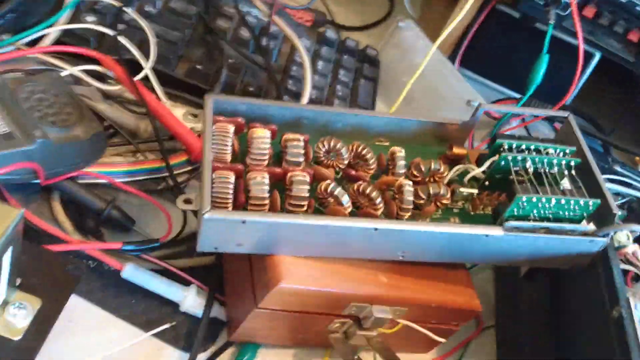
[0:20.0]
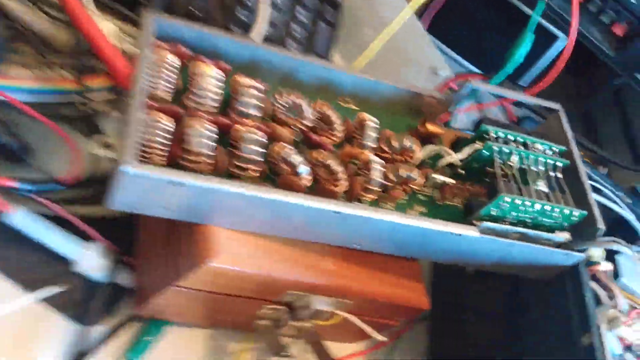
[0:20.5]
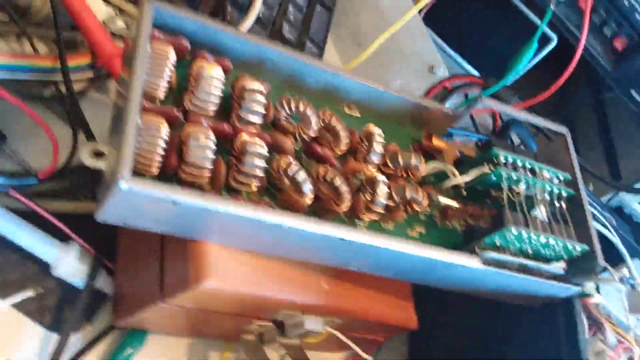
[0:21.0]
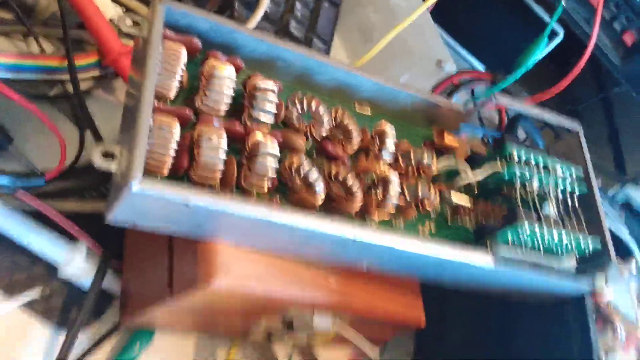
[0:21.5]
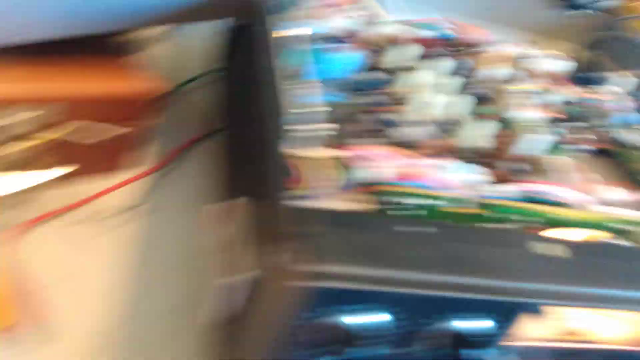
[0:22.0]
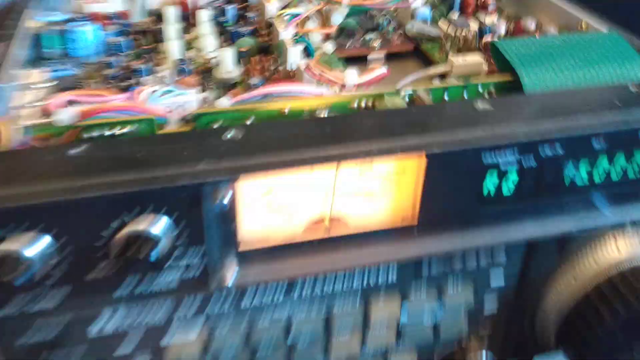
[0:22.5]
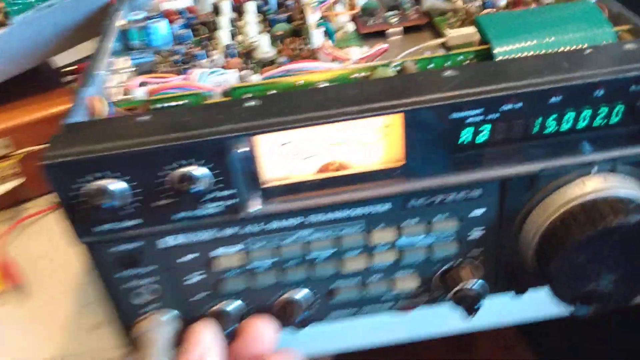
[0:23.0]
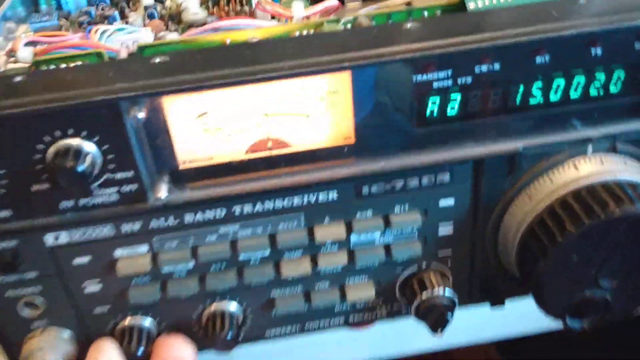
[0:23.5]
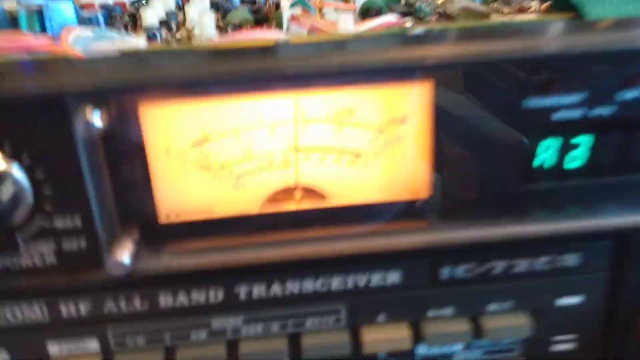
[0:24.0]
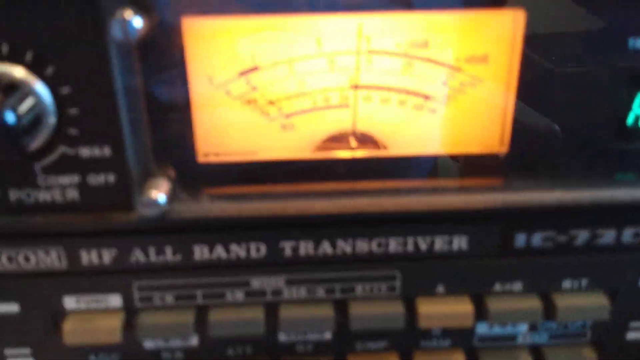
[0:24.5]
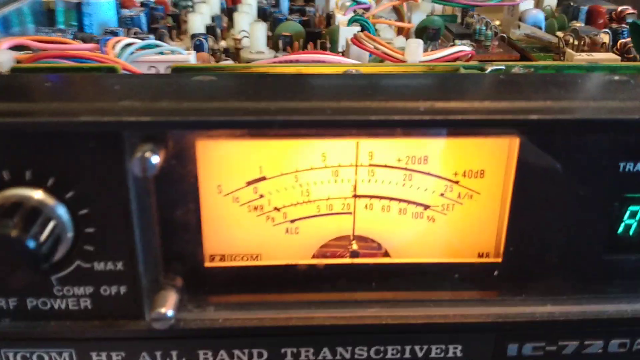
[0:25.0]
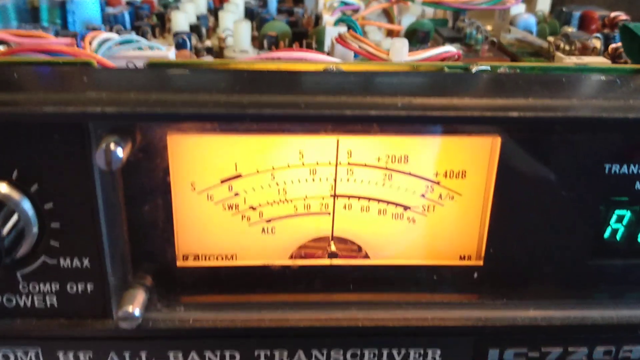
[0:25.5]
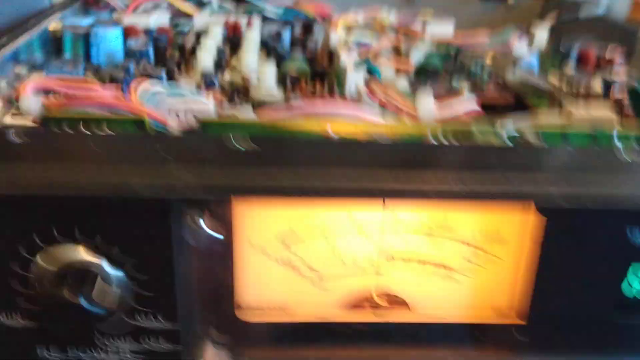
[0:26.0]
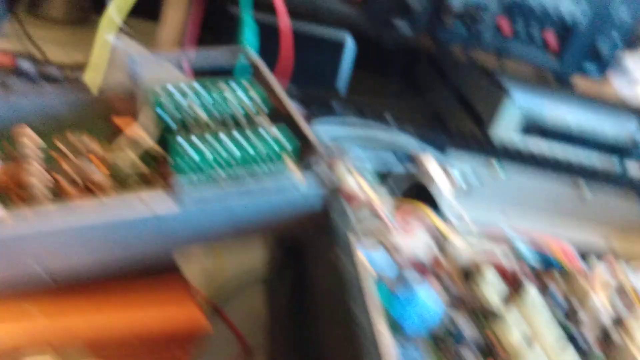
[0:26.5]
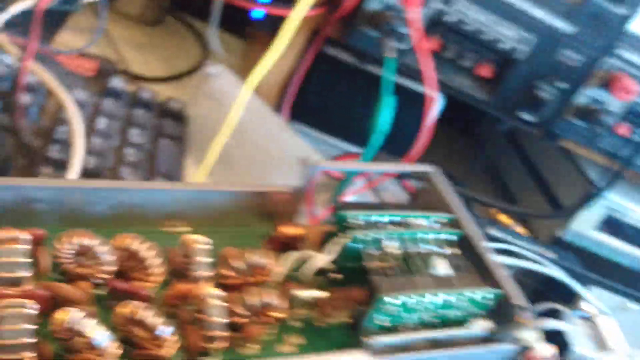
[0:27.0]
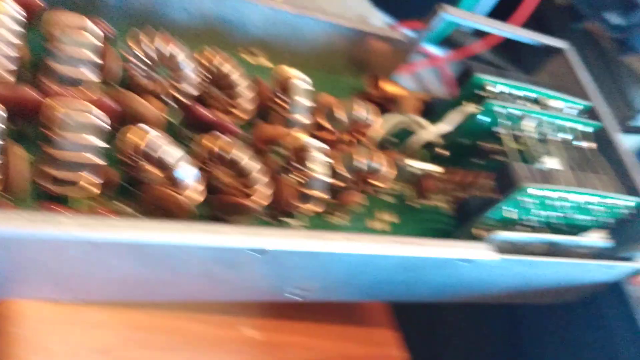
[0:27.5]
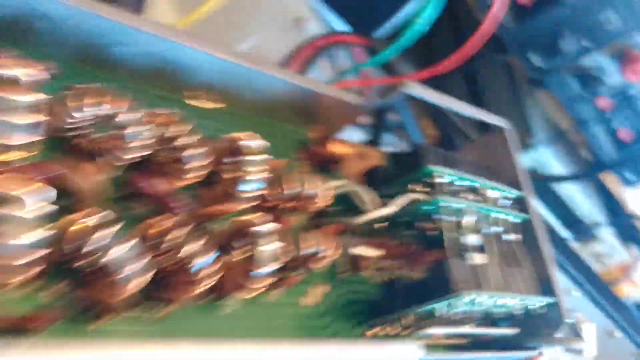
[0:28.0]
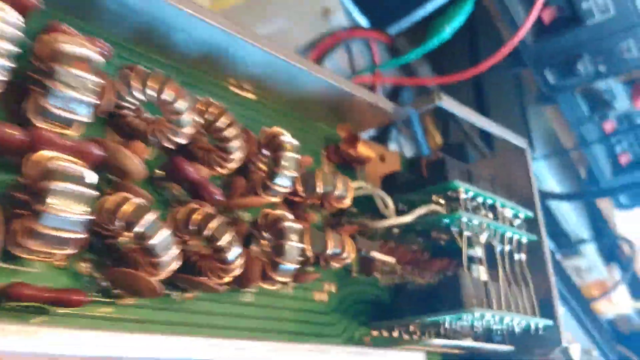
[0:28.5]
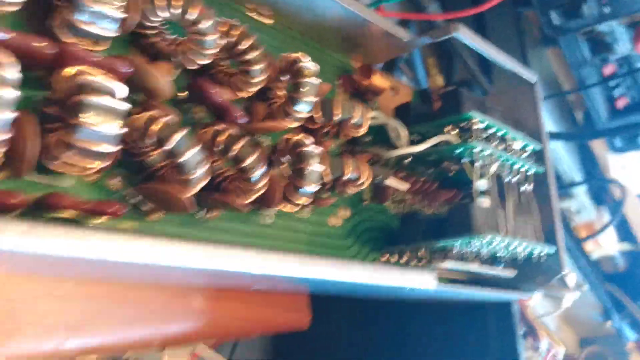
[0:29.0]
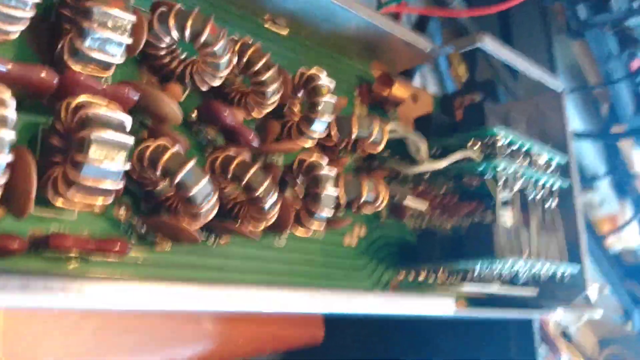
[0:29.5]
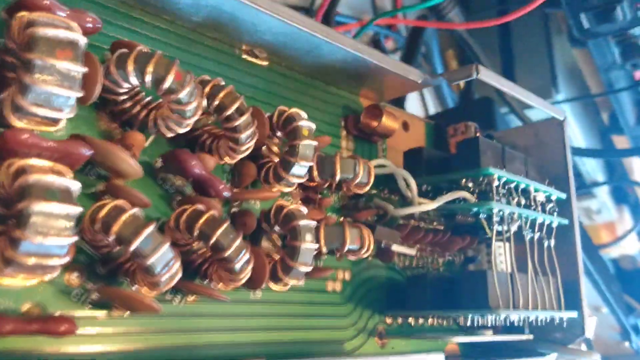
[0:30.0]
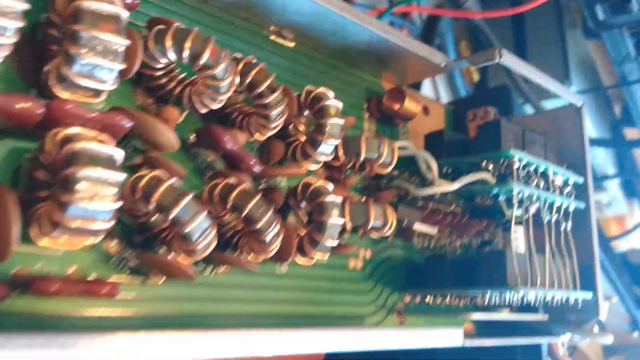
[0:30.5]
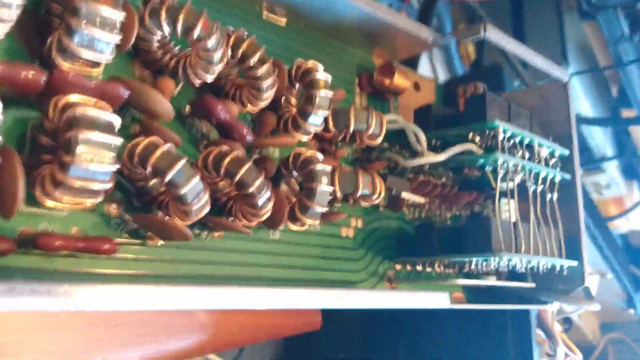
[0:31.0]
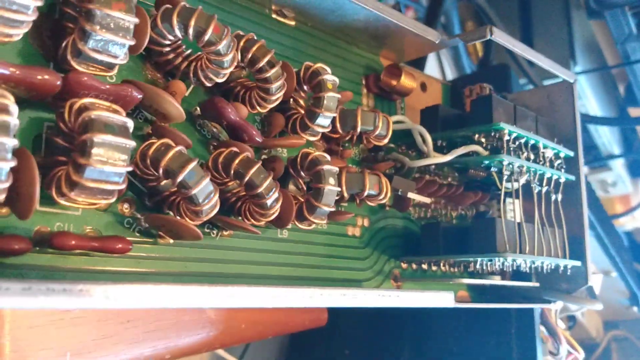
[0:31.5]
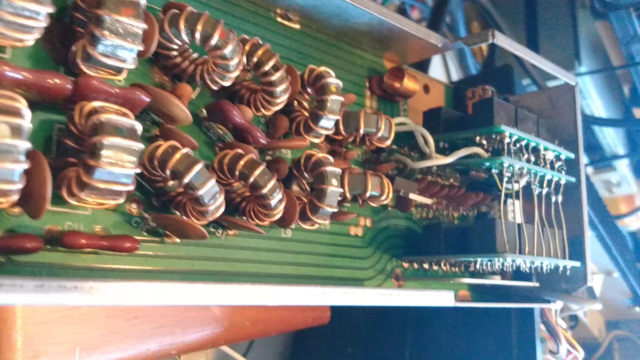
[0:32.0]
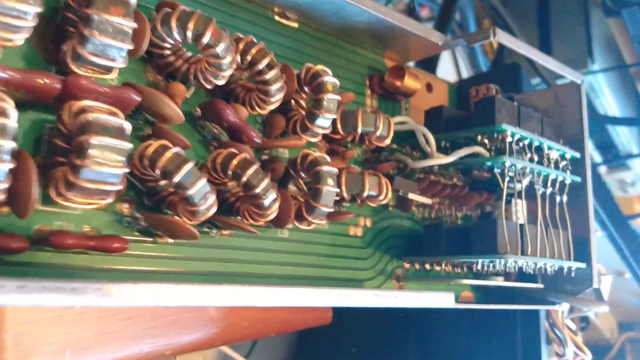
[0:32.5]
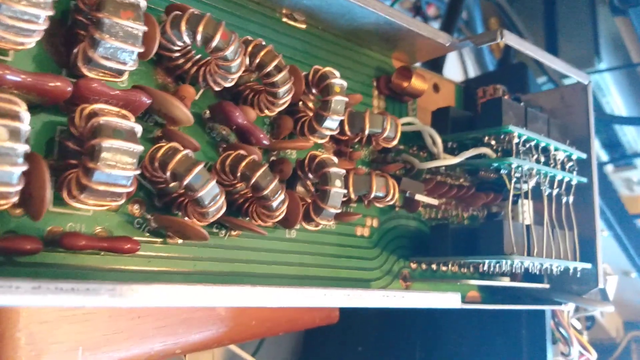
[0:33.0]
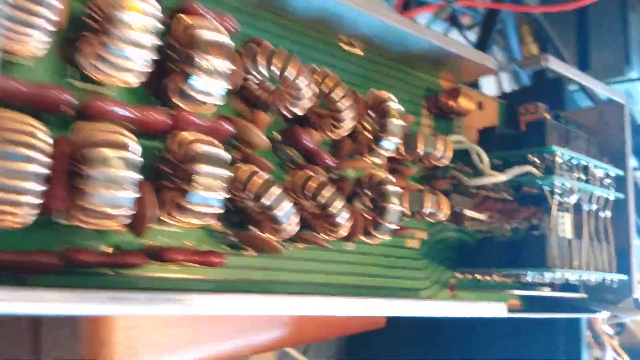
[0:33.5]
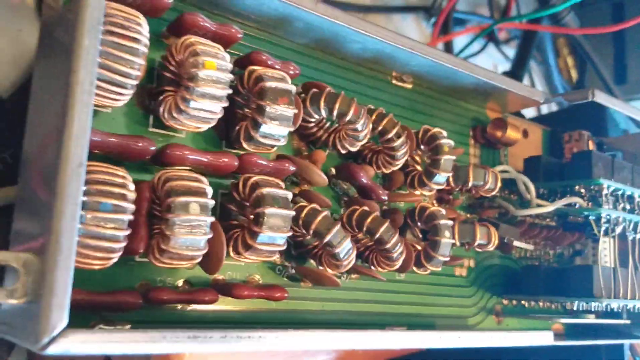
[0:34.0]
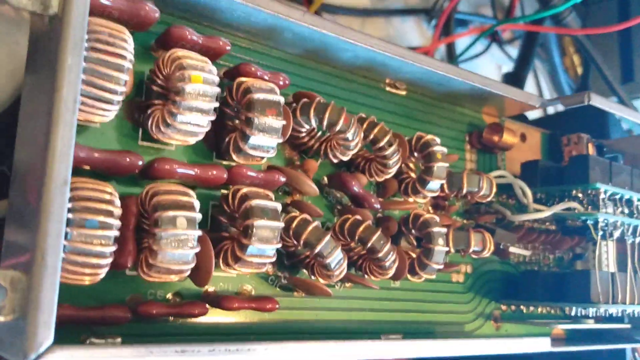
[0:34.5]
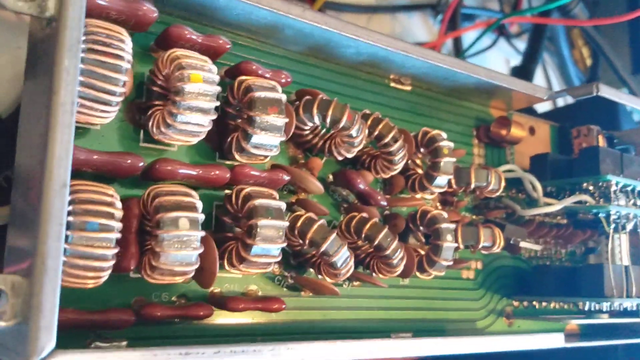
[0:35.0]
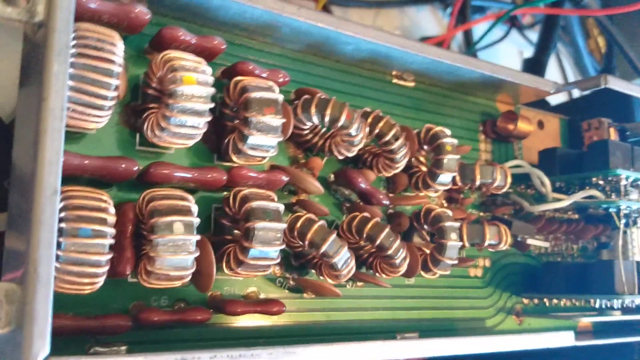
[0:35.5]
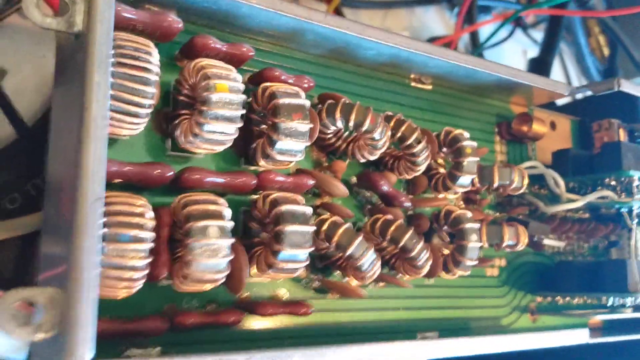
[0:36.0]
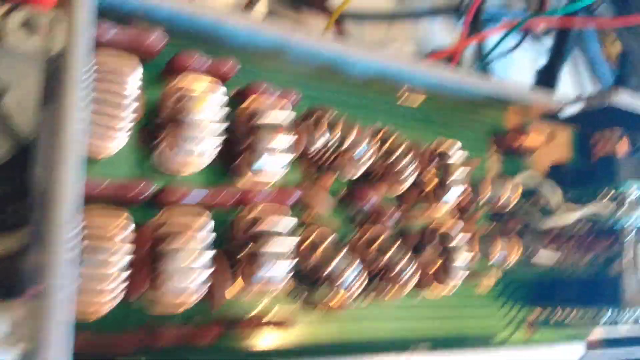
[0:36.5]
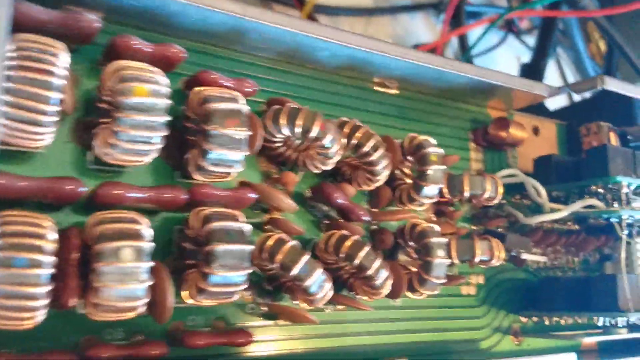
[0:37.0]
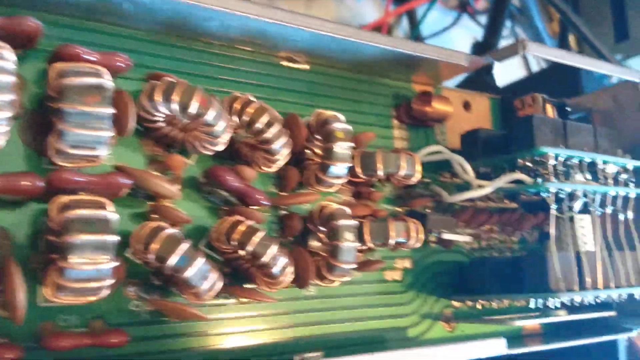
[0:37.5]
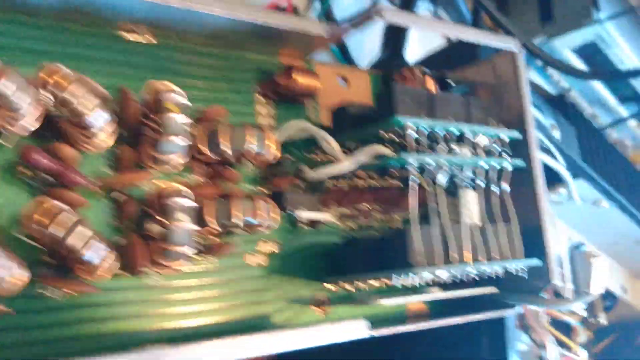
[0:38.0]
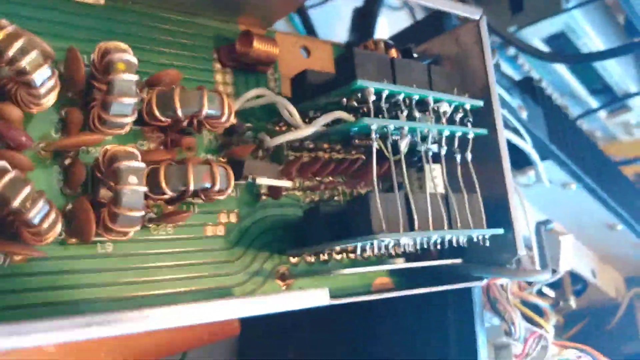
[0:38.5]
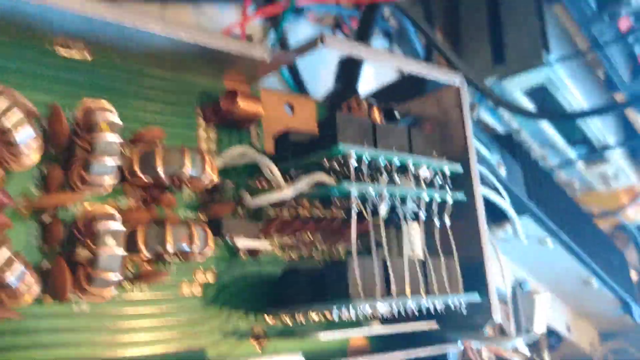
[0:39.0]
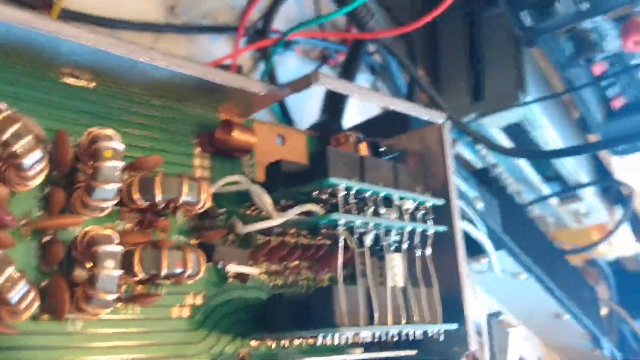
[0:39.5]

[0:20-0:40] The camera pans away from the device and over what look like boxes on the table, settling on a metal box that holds a number of bronze or copper coils. The camera then goes back to the transceiver, and as it passes over the top, the lid is confirmed to be off, revealing exposed circuits inside along with some copper tubing and wires. The camera returns to the silver box, which is filled with bronze wire coils and some circuit boards; green and red wires are to the left of it. The sort of shaky camera zooms in and out of the box. The inside surface of the box is green and looks like a circuit board, with the bronze coils attached to it, and other electronics are soldered into the base of this board.